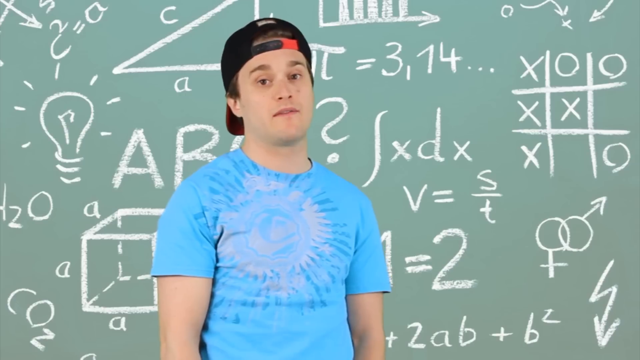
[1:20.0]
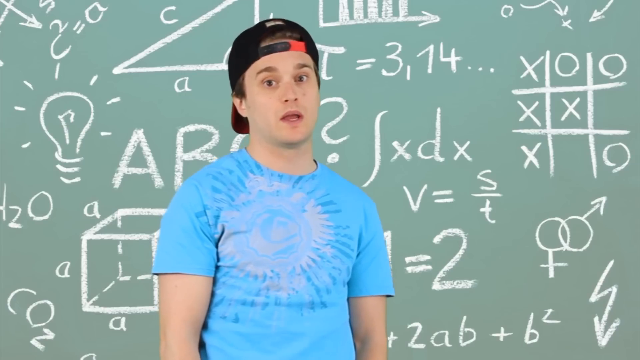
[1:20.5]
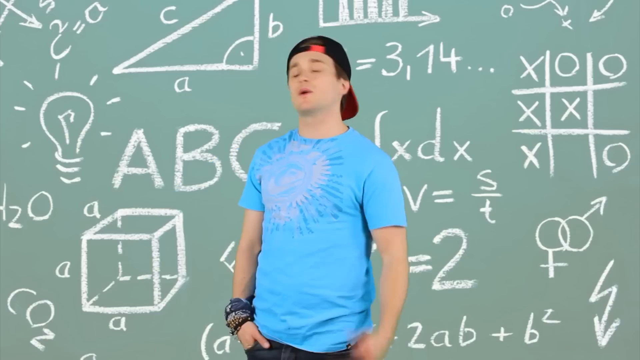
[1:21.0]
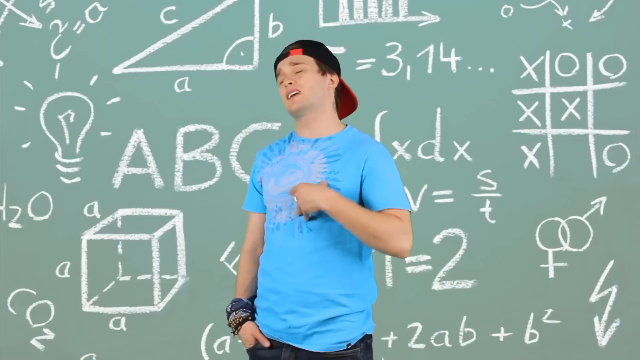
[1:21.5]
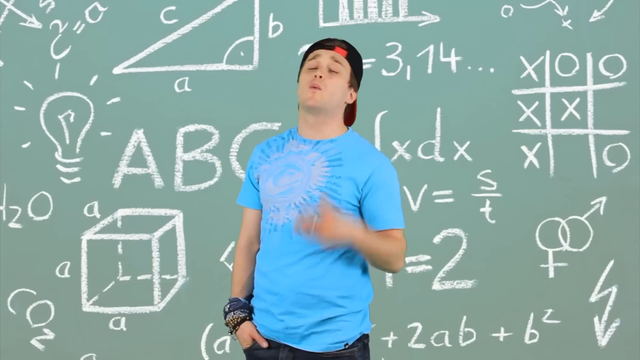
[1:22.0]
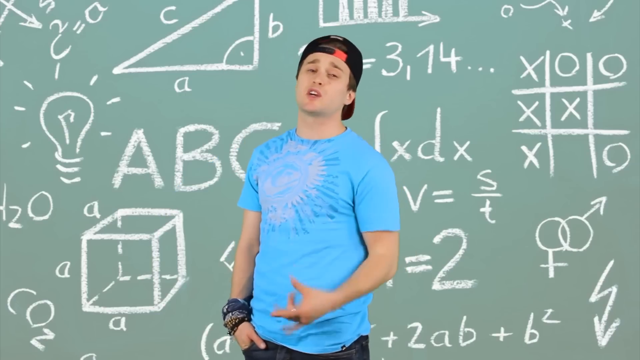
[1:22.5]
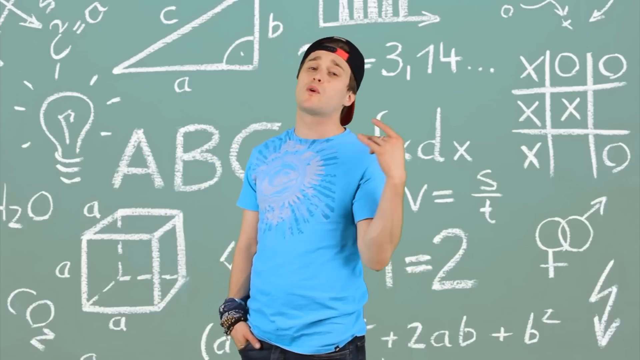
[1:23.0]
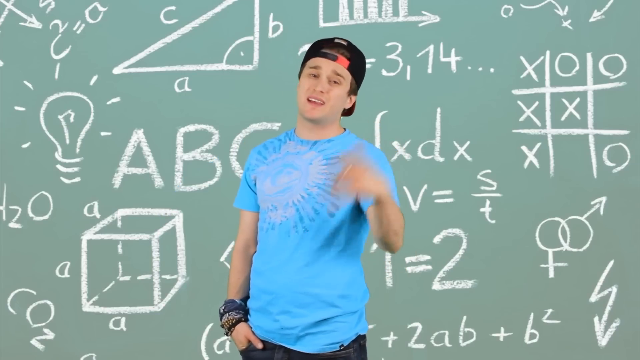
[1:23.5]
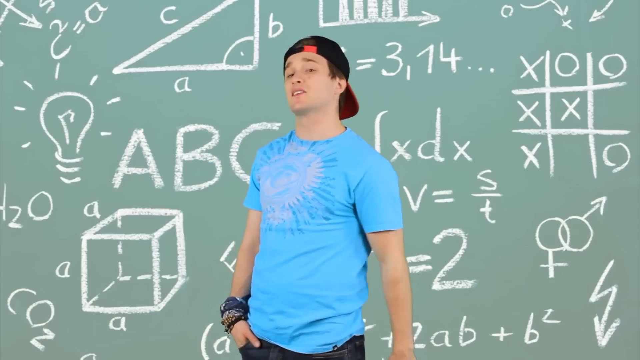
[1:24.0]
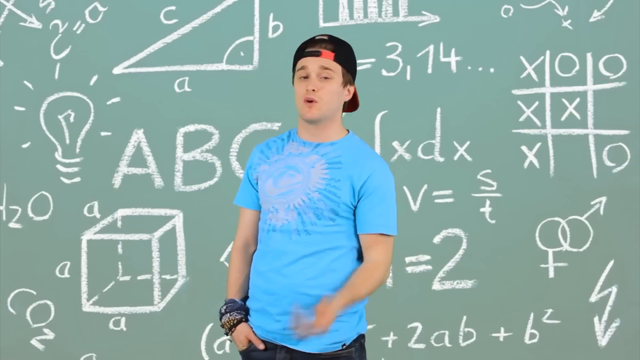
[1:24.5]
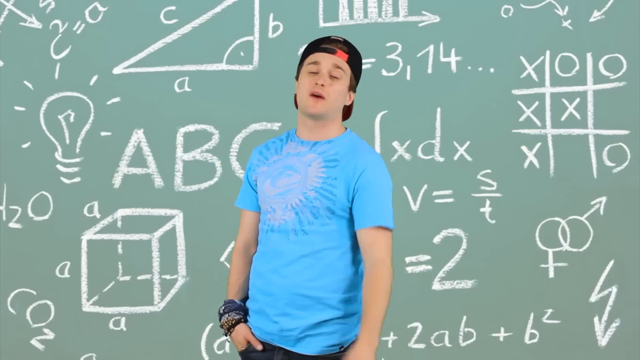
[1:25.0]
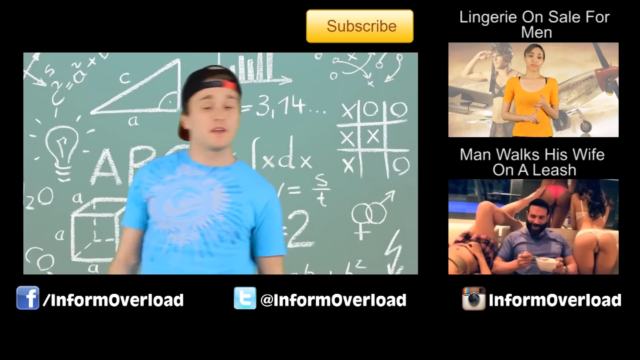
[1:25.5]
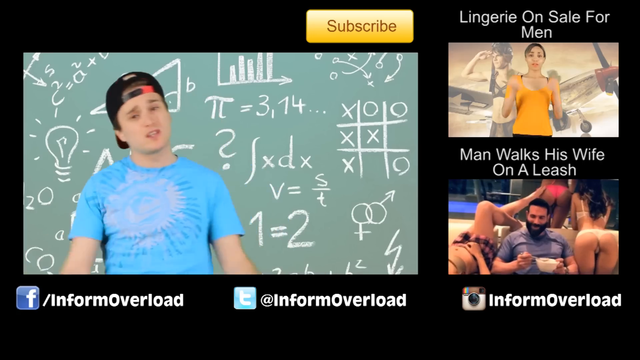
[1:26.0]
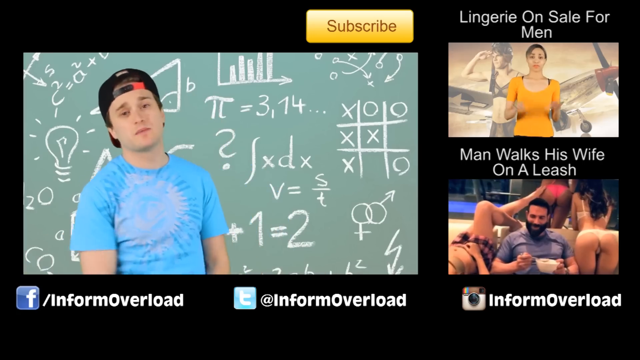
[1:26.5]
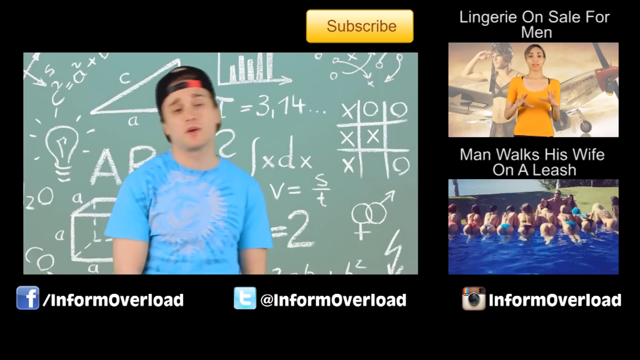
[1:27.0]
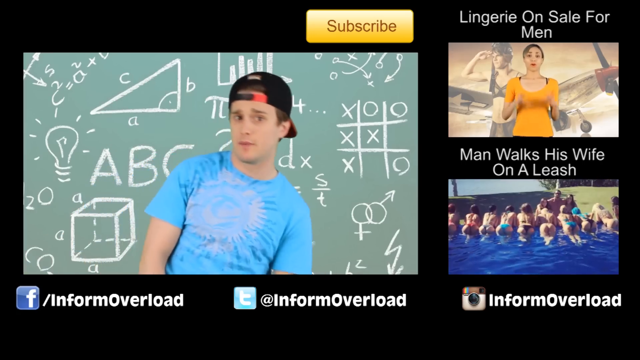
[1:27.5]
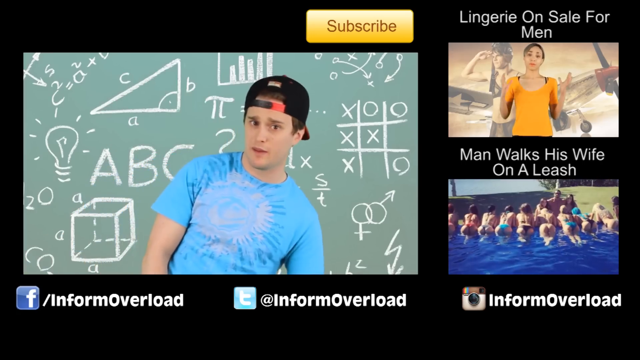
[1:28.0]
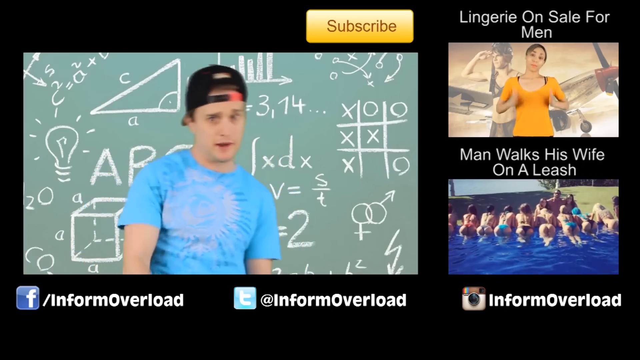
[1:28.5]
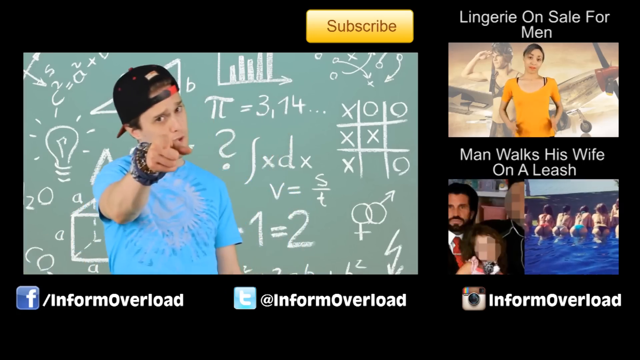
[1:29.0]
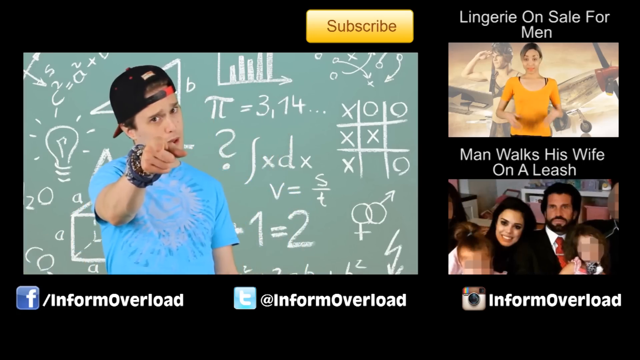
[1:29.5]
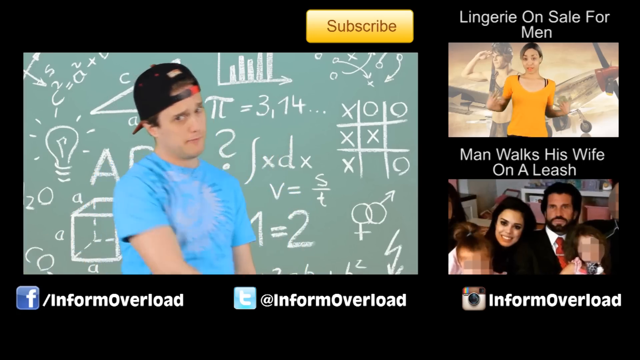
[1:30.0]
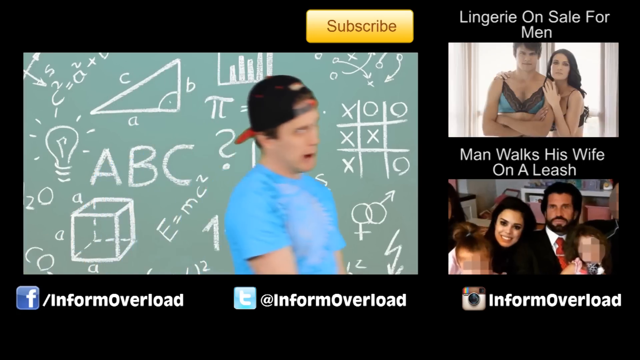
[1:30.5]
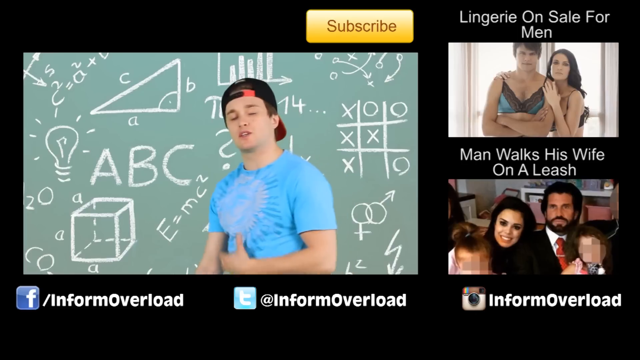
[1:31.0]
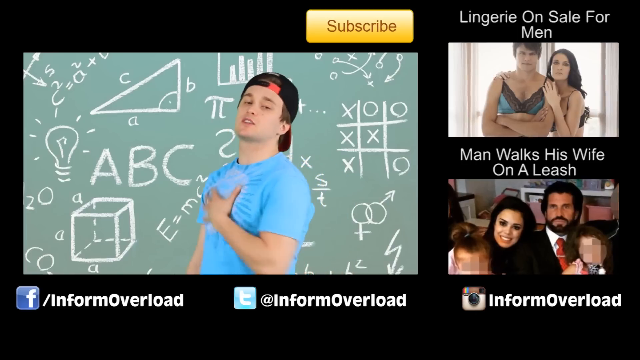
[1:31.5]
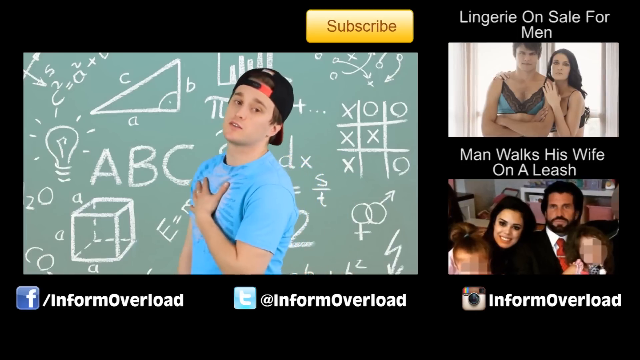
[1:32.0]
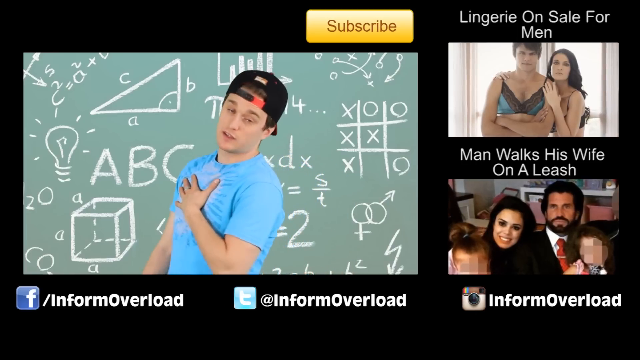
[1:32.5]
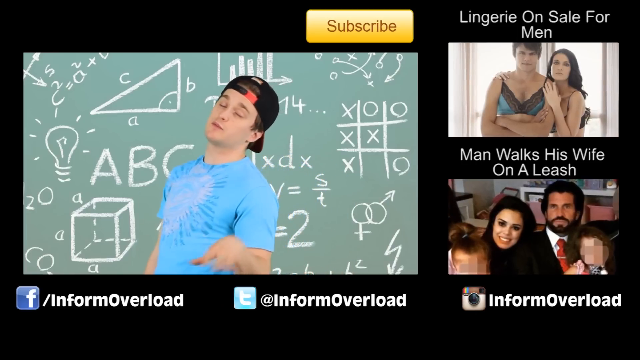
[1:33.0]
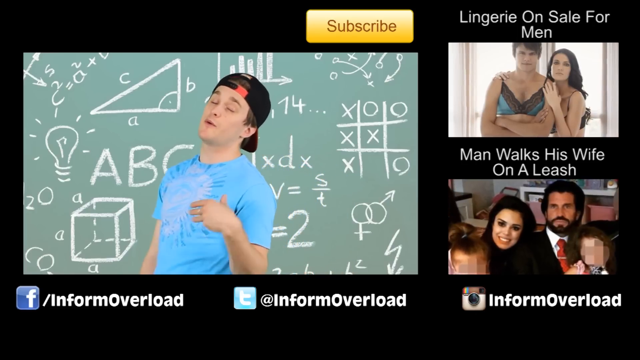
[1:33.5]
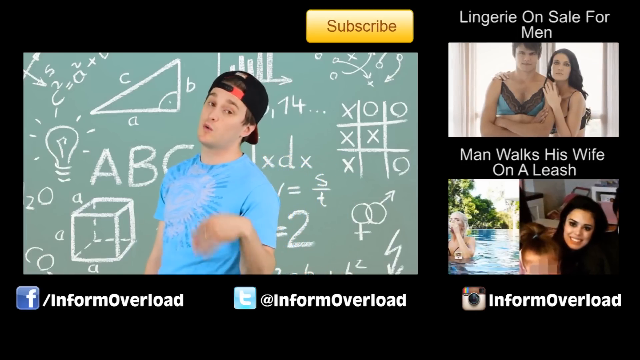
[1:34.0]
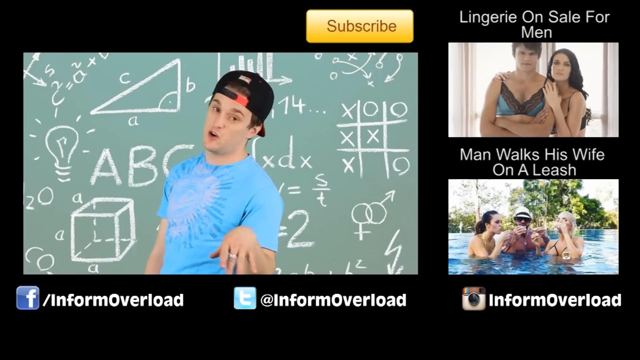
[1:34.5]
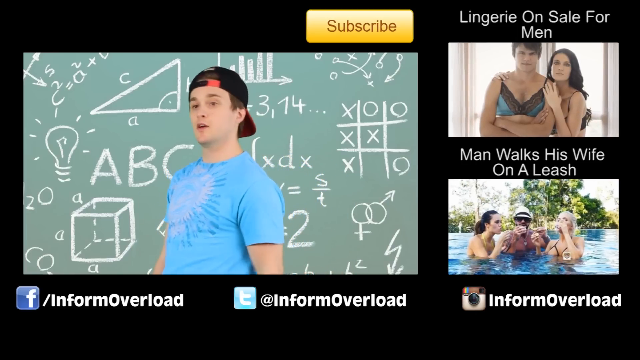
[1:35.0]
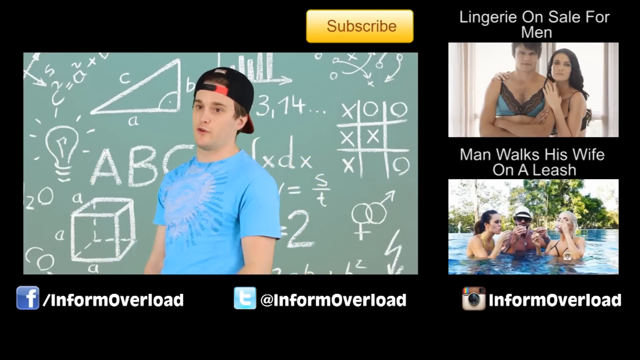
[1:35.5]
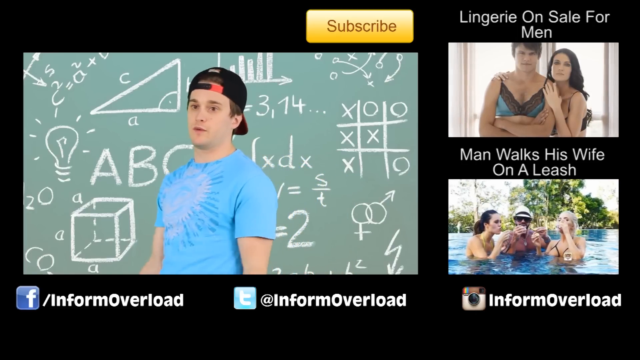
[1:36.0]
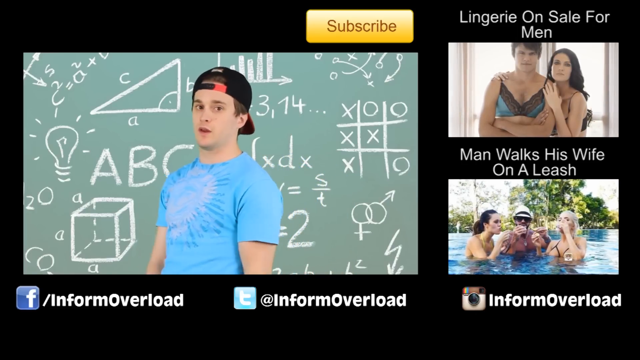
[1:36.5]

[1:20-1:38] The young man in the blue T-shirt and baseball cap talks to the camera, pointing to himself and pointing at the board behind him. An overview of the final screen follows, showing the young man with "subscribe" in a yellow box above him and "Inform Overload" with a hashtag just below him. To the right are some adverts or more videos: one is lingerie on sale for men, and the other is a man walked his wife on a leash, possibly other videos from the Inform Overload content. These videos scroll on the right-hand side, showing more imagery, including men in lingerie.